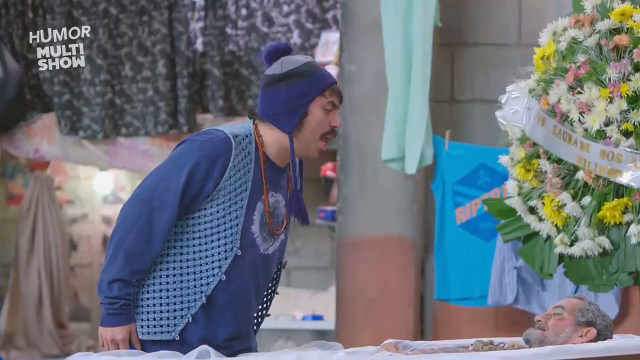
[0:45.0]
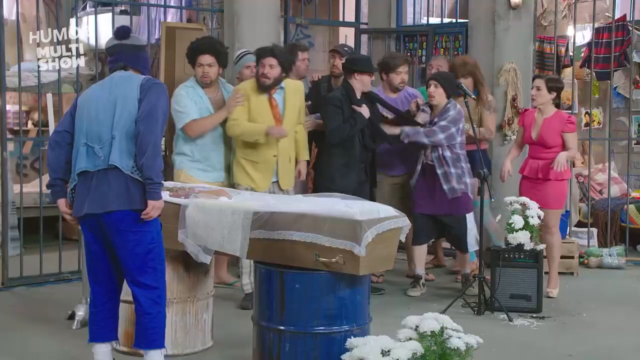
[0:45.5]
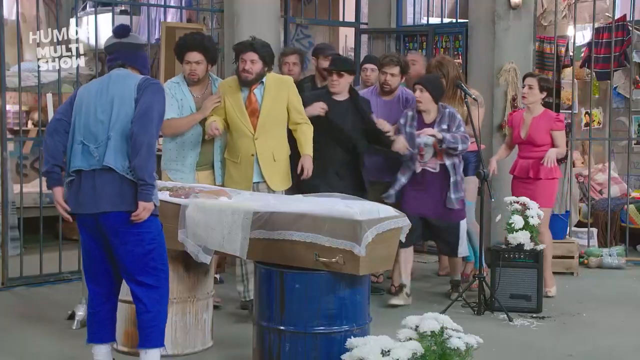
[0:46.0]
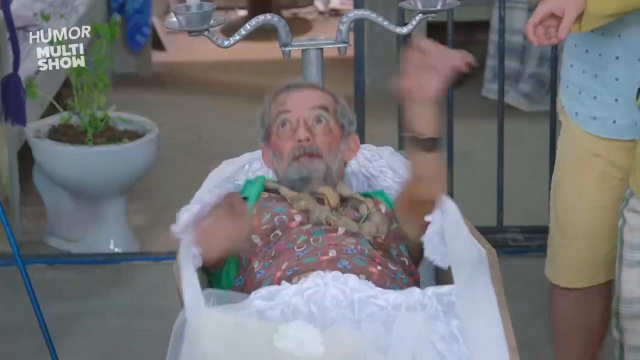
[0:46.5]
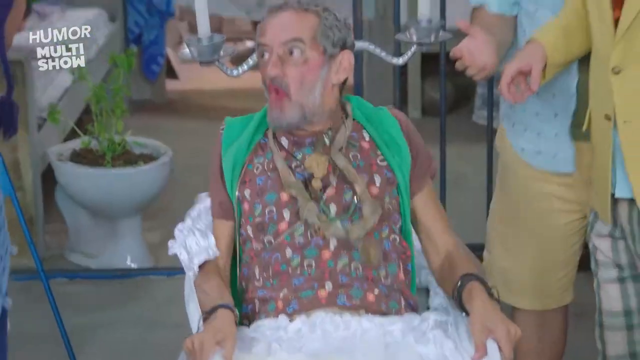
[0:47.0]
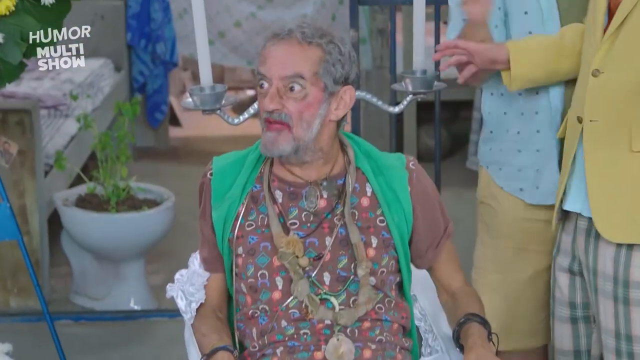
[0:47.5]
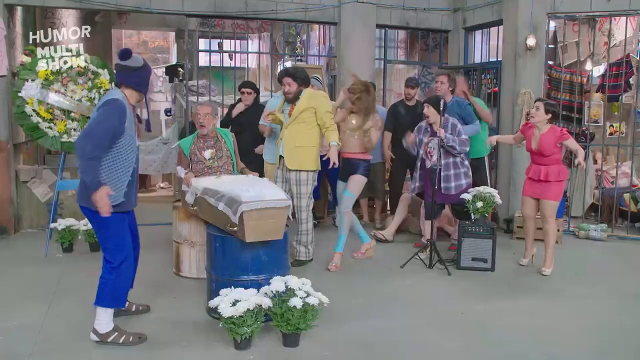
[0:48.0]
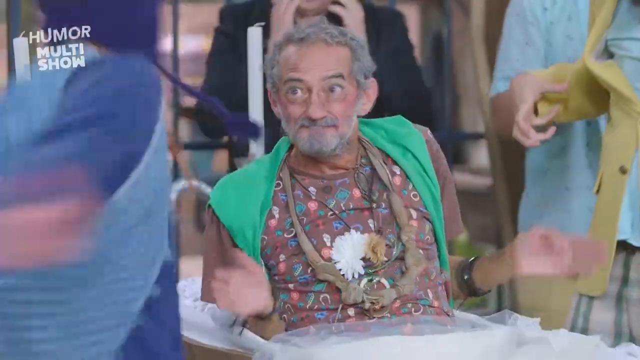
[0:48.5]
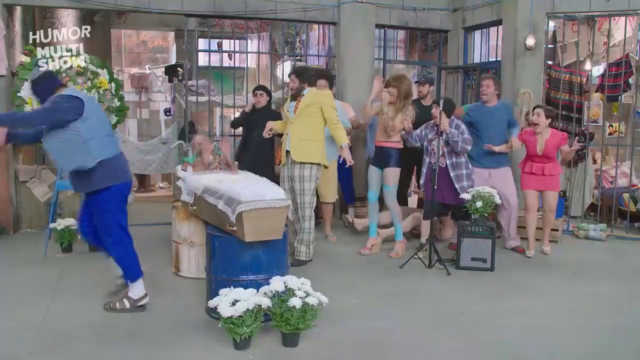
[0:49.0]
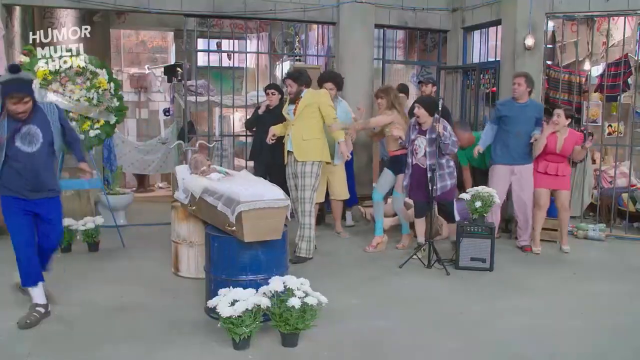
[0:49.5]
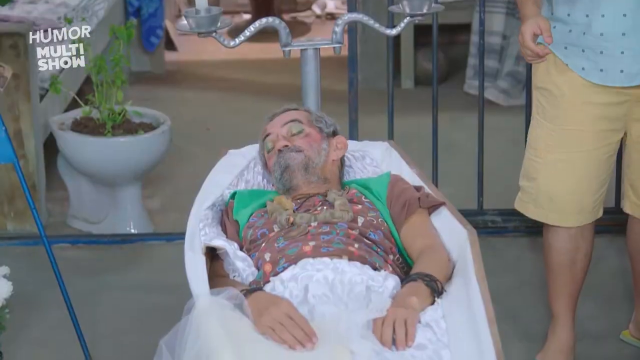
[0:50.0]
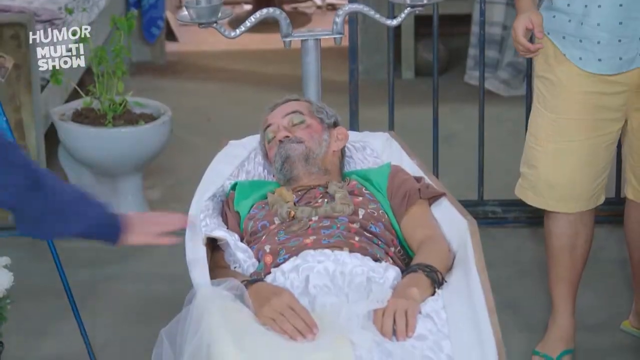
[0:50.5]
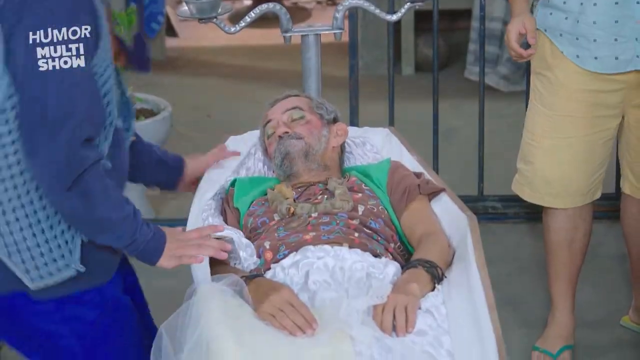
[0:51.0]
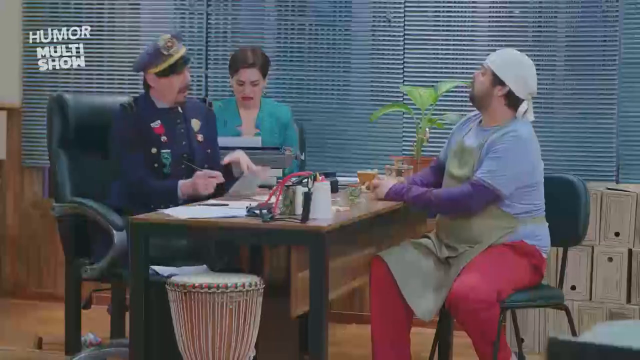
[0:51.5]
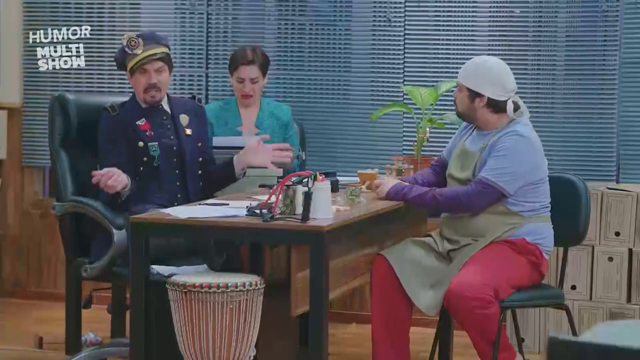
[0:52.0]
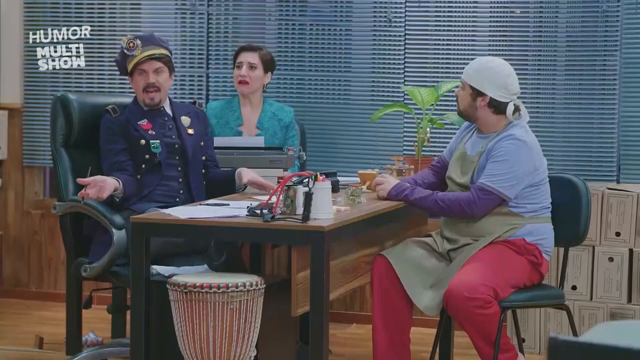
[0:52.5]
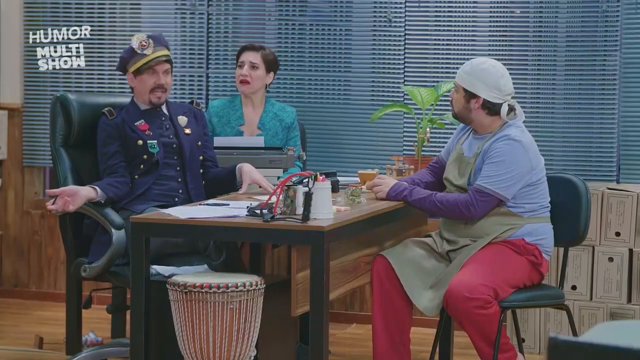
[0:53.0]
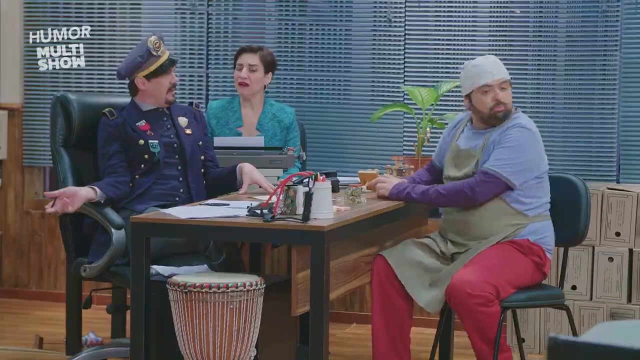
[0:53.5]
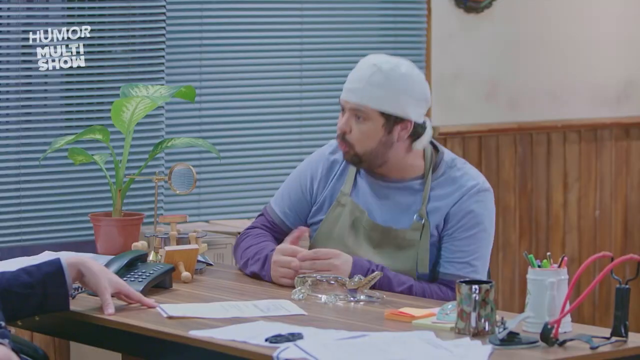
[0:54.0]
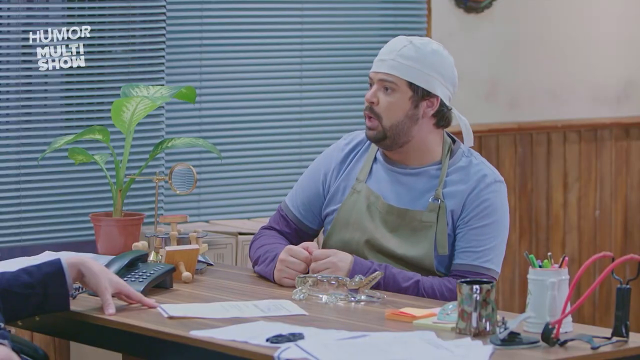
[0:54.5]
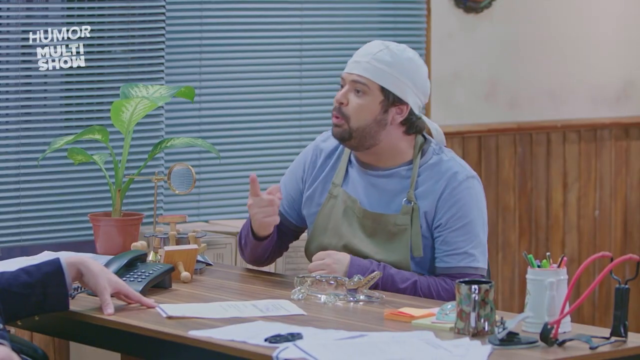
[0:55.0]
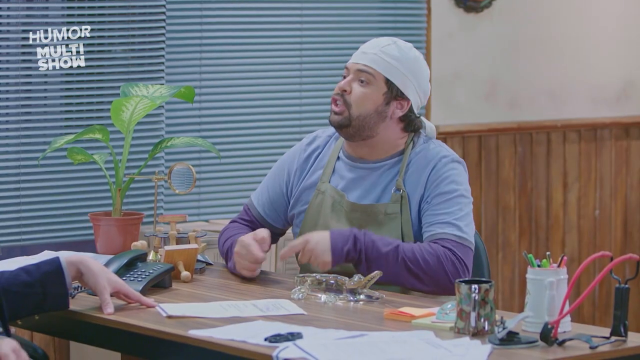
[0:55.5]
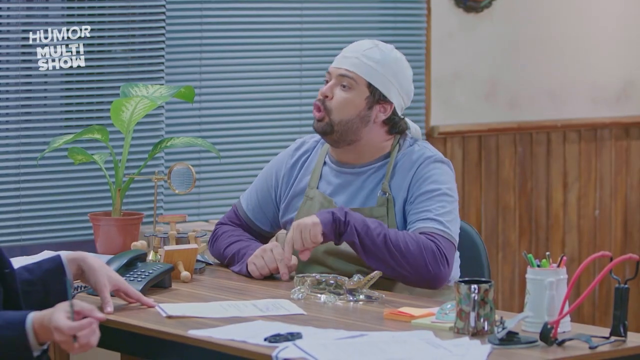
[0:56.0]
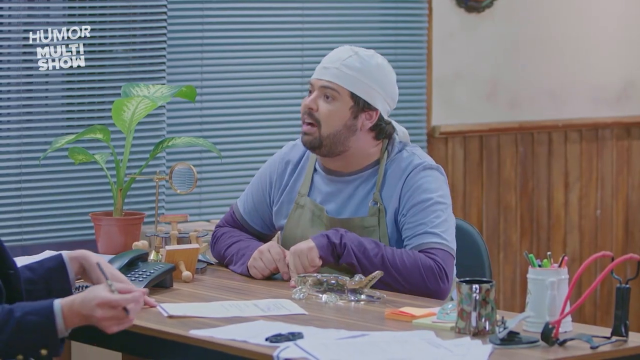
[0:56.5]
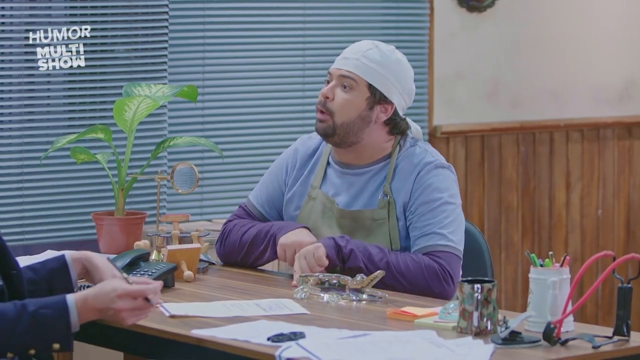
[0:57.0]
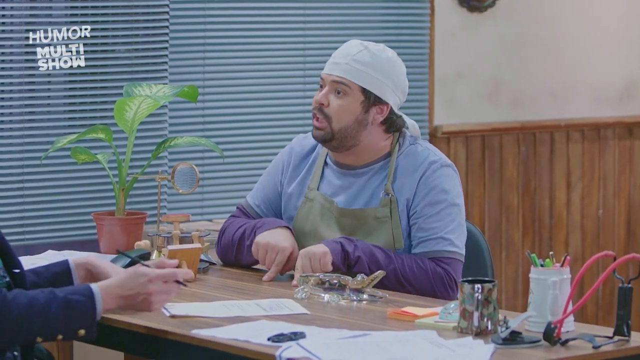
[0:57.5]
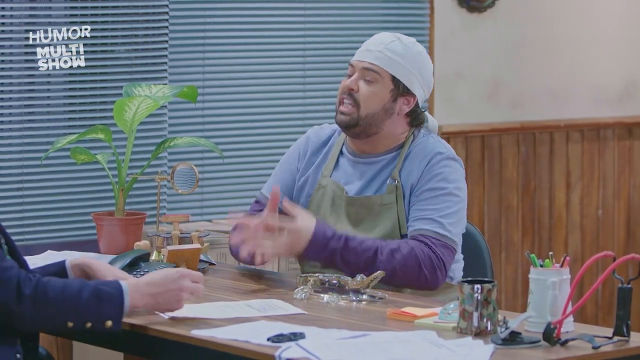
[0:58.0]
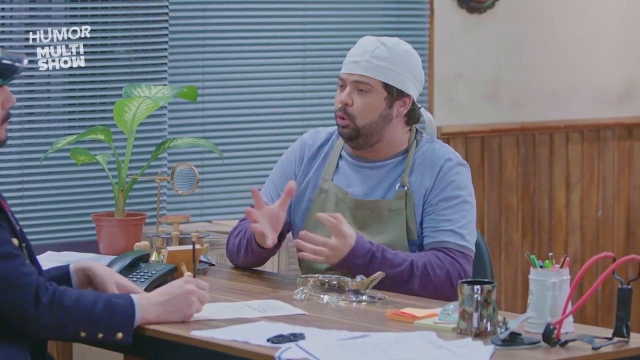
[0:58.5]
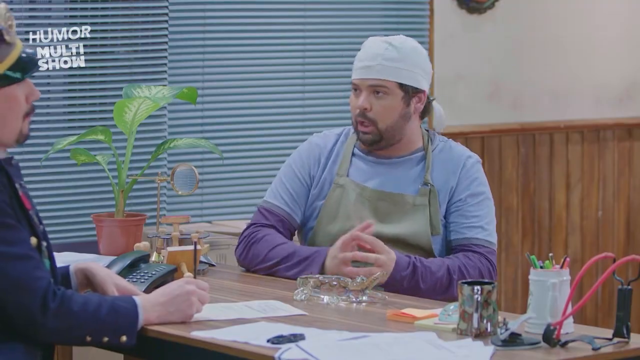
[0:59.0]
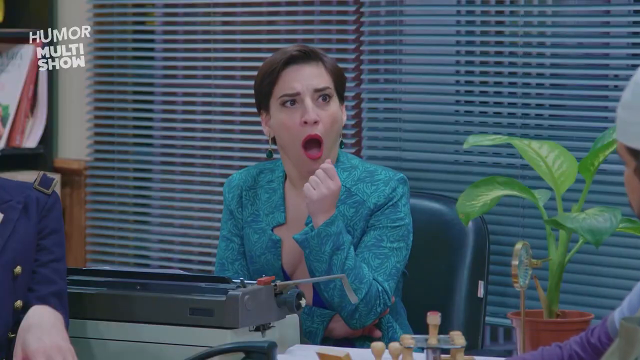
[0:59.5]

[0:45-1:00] At a funeral, the man in blue is talking to the man in the coffin. A bunch of people come in, and the man in the coffin jumps up; the man in blue hits him, and he ends up back in the coffin. Back in the office, the man in the surgeon's hat is still mad, the lady at the typewriter has her mouth open in shock as if saying "oh my God," and the man in the military outfit acts very effeminate. There is one piece of paper on the desk. At the coffin, about 10 people come out, including a man in a yellow outfit and a couple of ladies who all look matronly. Everyone wears bizarre, very colorful outfits, and someone wears yellow shorts. They are quite surprised that the man who was laid out dead has been hit in the face. The man in the coffin wears some kind of t-shirt with a green vest.